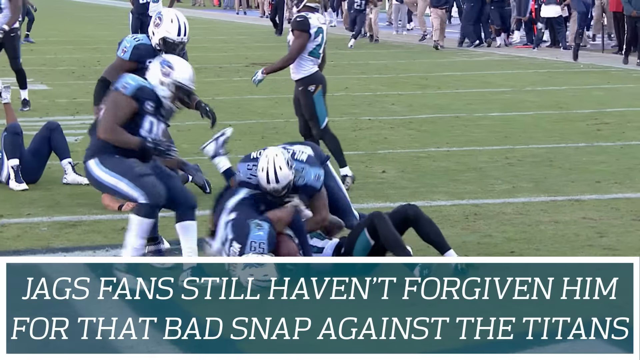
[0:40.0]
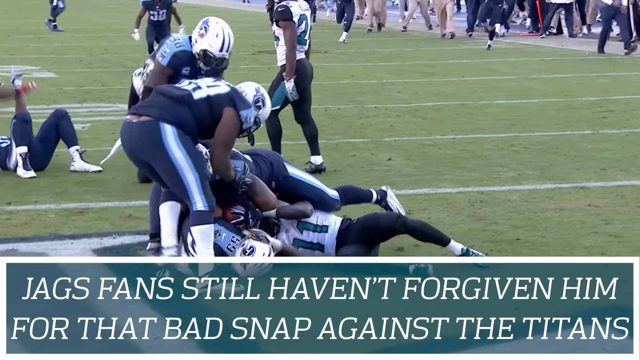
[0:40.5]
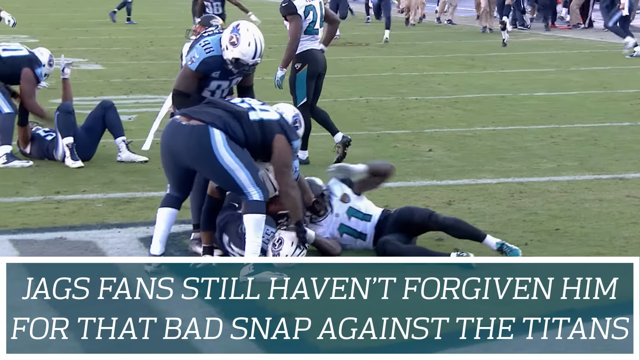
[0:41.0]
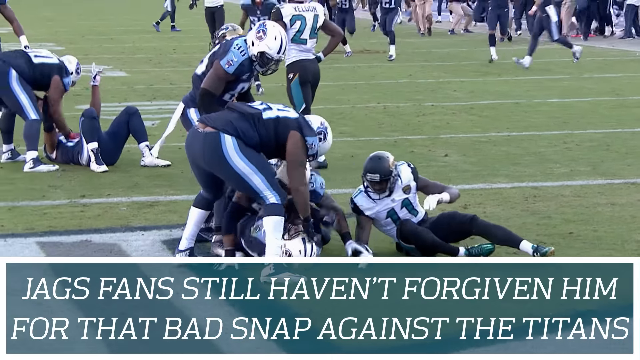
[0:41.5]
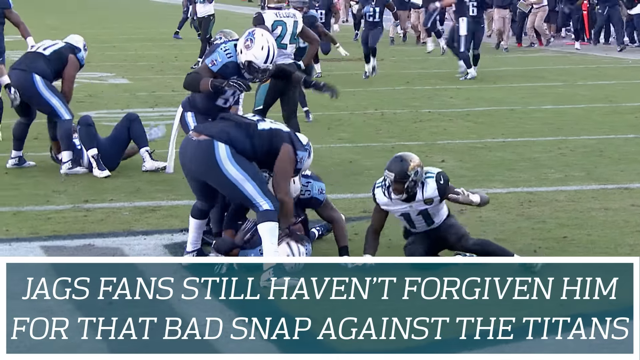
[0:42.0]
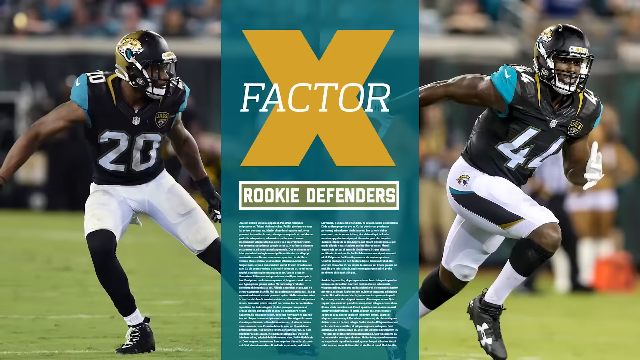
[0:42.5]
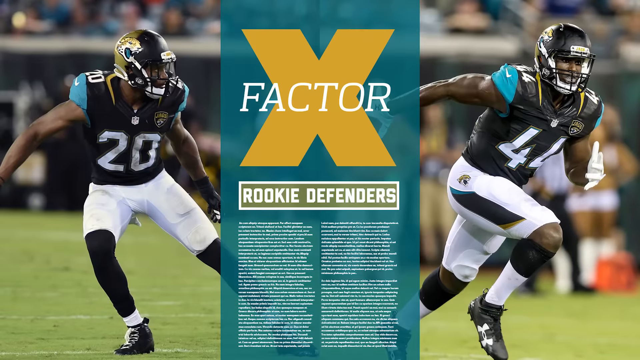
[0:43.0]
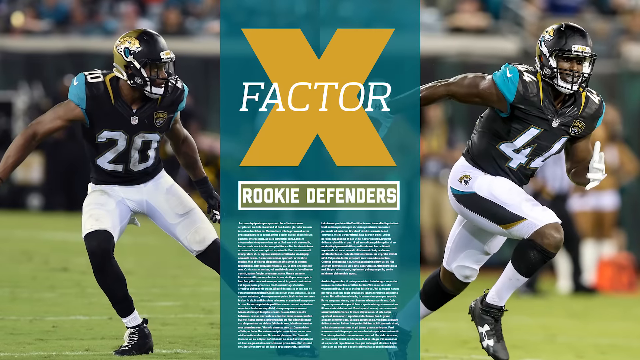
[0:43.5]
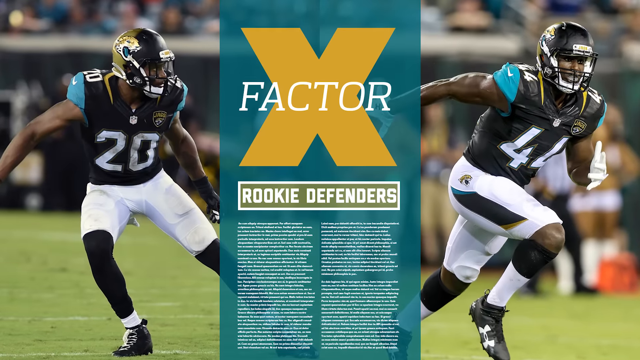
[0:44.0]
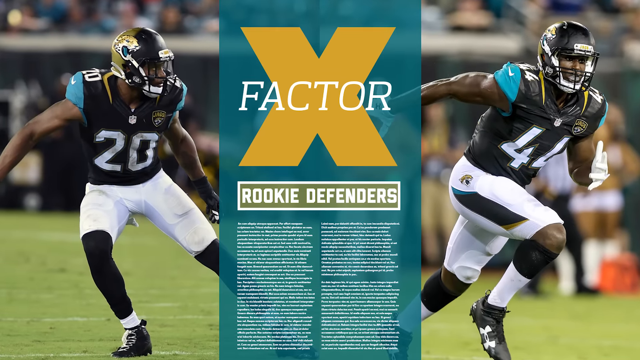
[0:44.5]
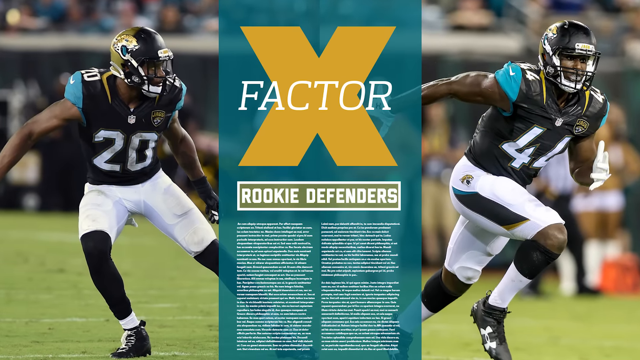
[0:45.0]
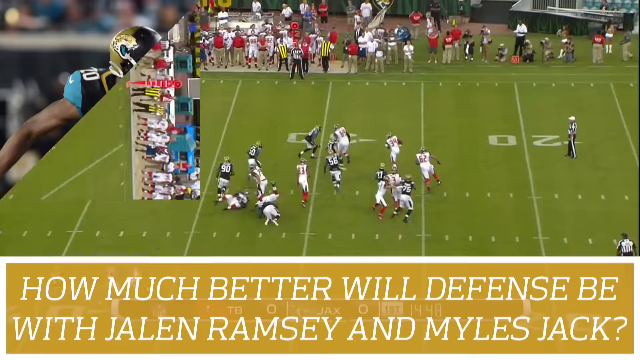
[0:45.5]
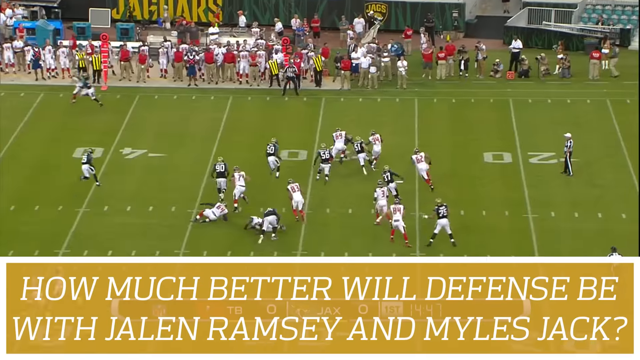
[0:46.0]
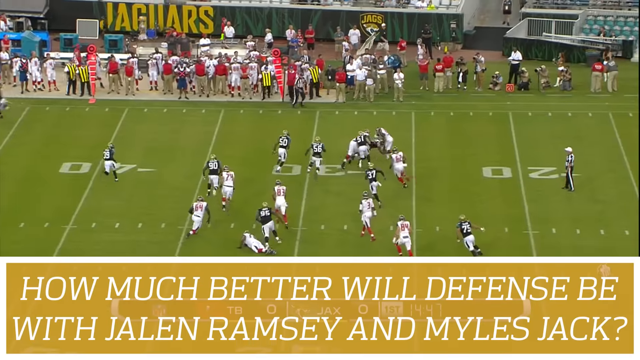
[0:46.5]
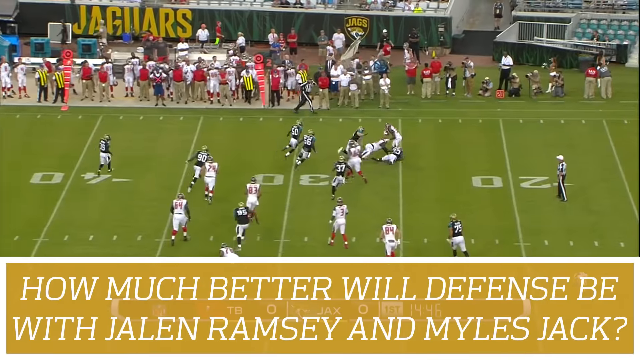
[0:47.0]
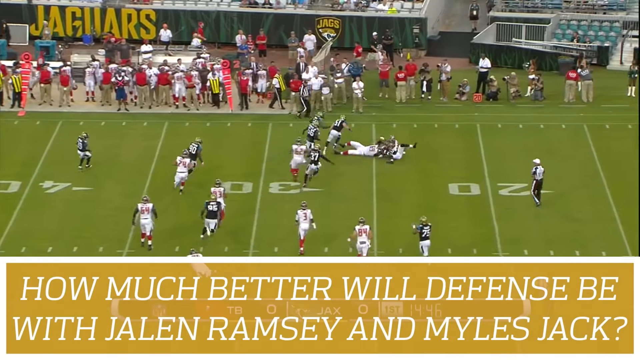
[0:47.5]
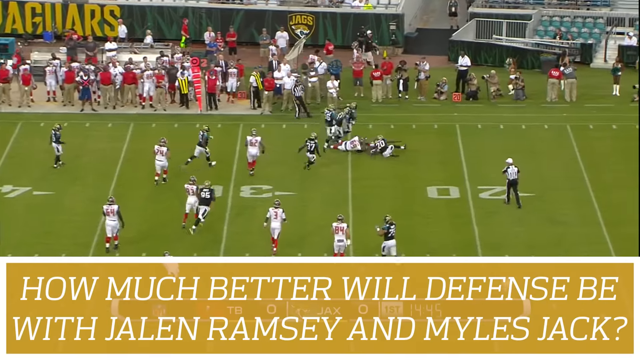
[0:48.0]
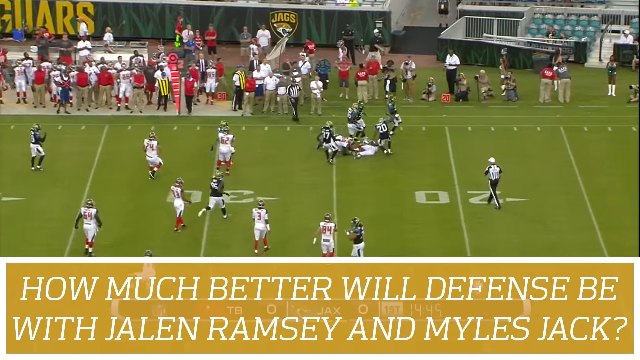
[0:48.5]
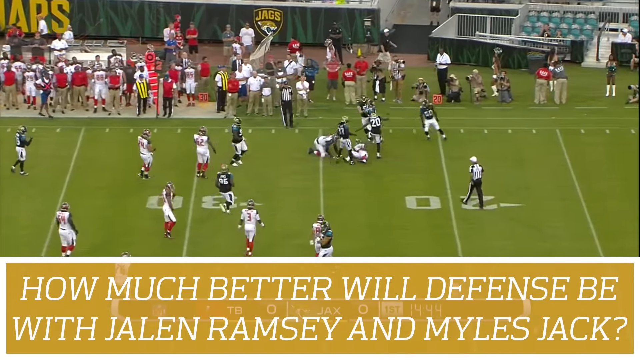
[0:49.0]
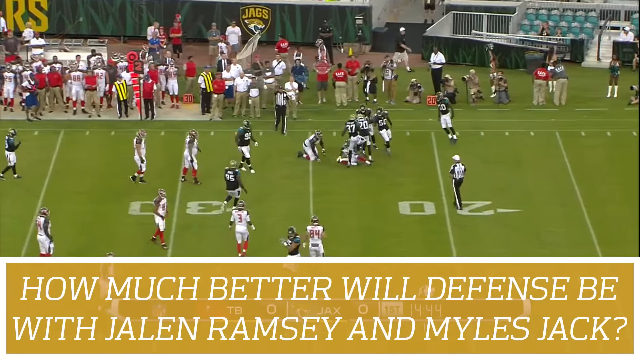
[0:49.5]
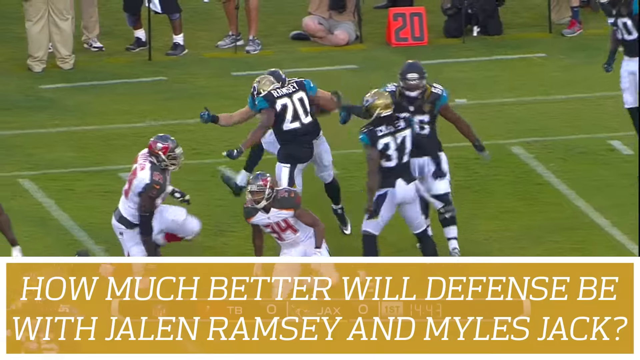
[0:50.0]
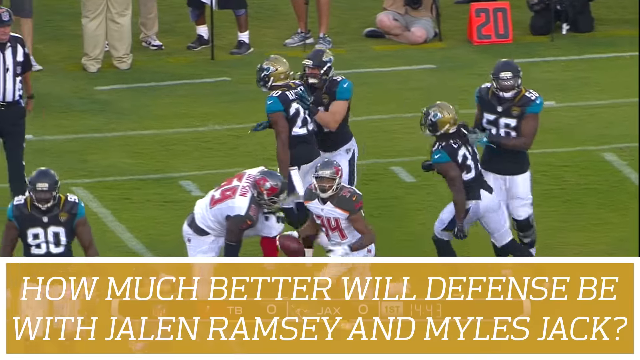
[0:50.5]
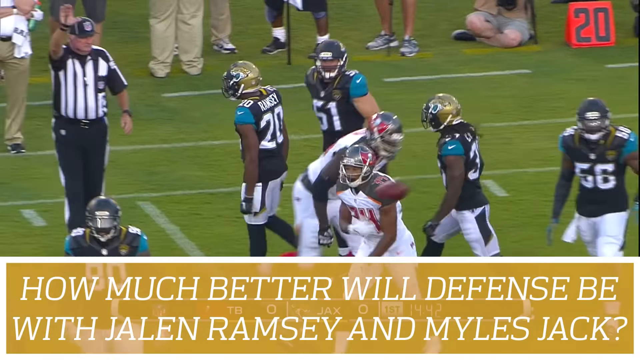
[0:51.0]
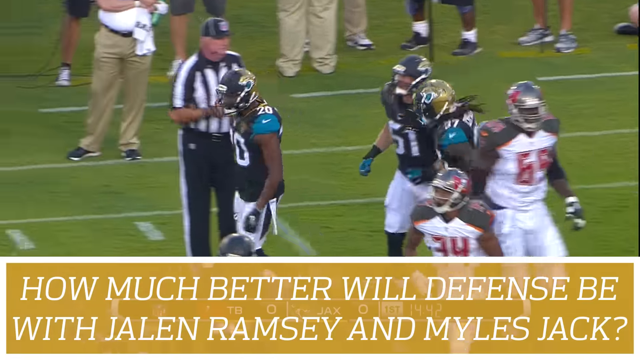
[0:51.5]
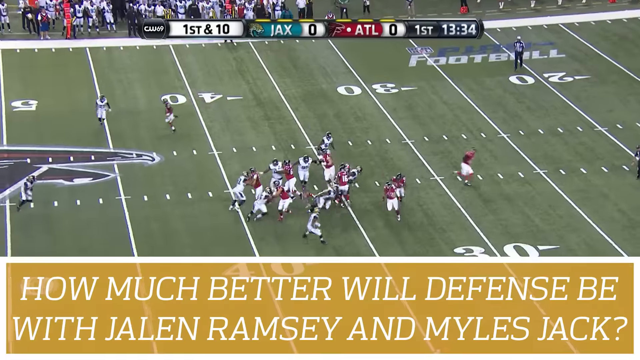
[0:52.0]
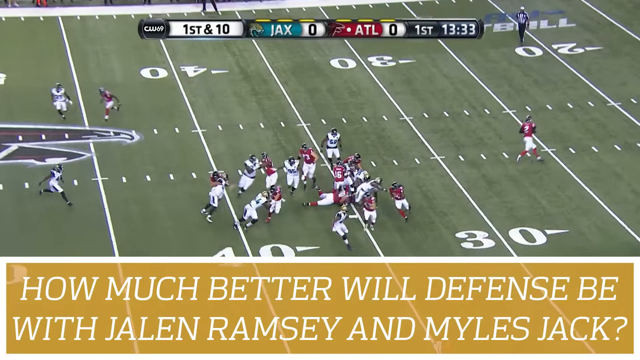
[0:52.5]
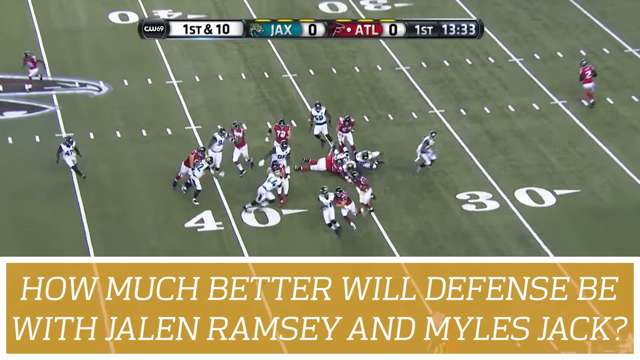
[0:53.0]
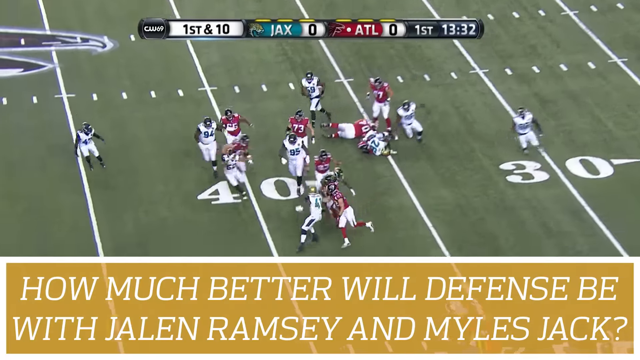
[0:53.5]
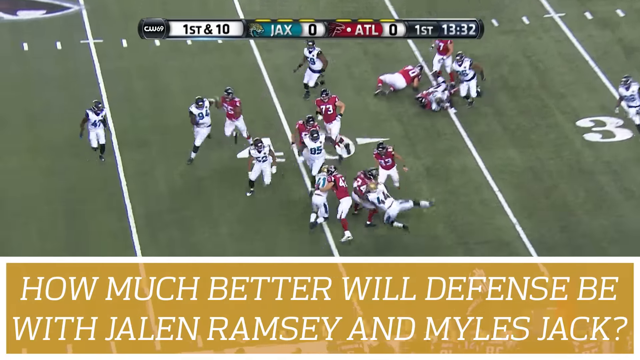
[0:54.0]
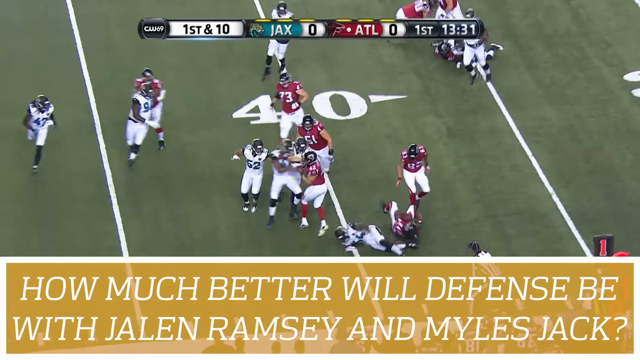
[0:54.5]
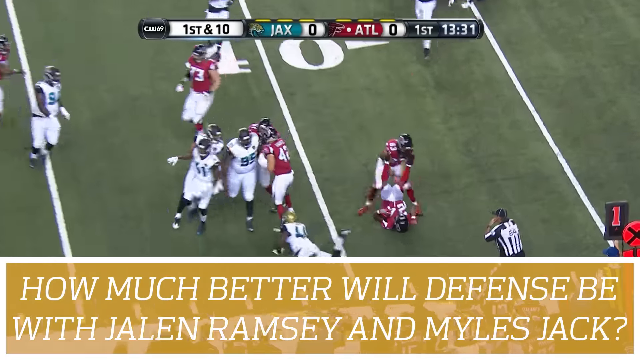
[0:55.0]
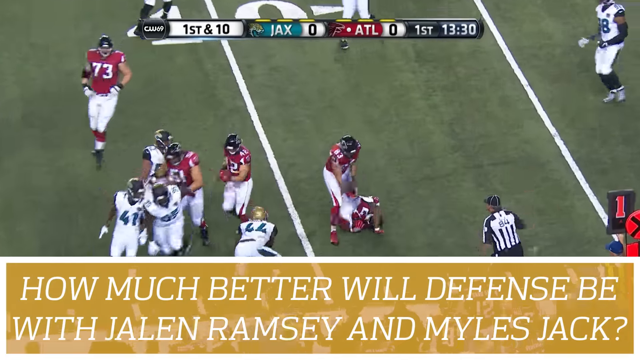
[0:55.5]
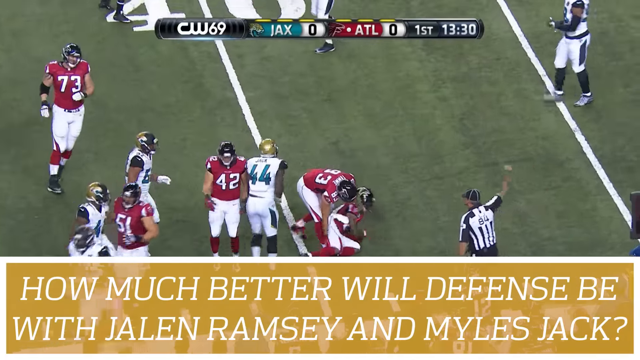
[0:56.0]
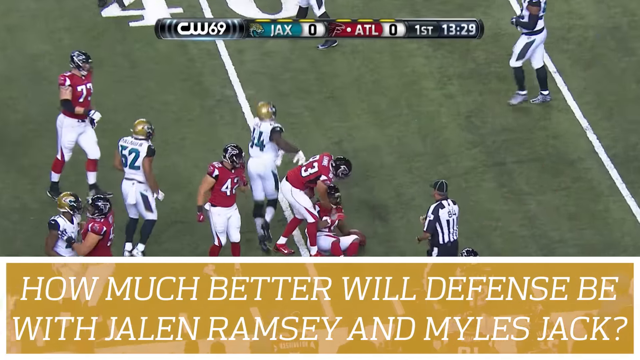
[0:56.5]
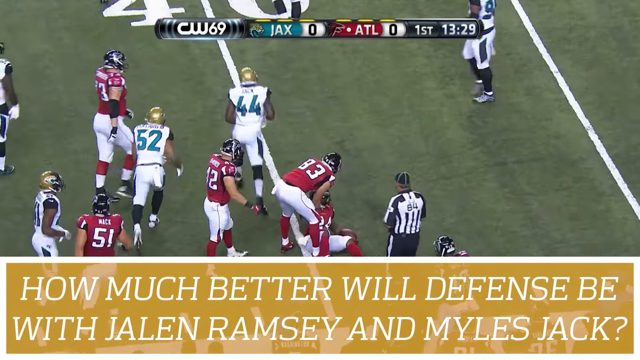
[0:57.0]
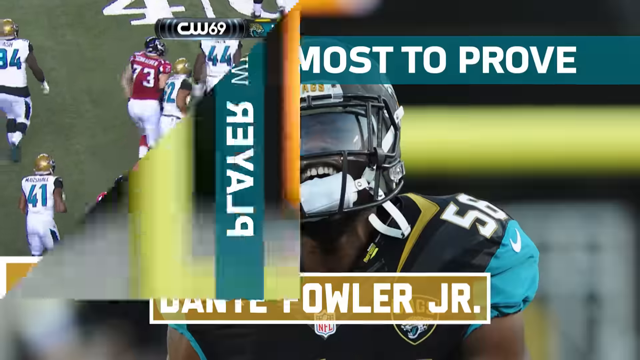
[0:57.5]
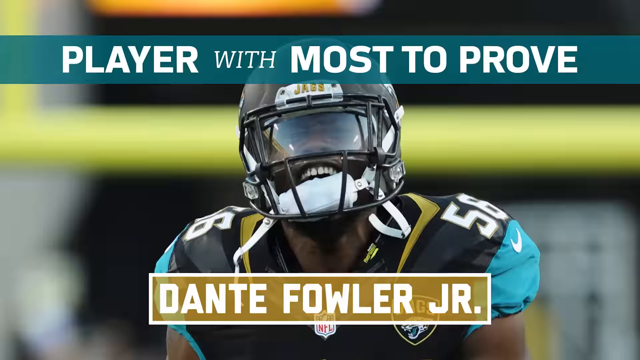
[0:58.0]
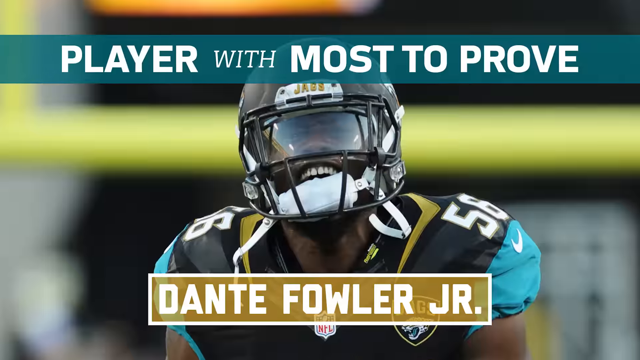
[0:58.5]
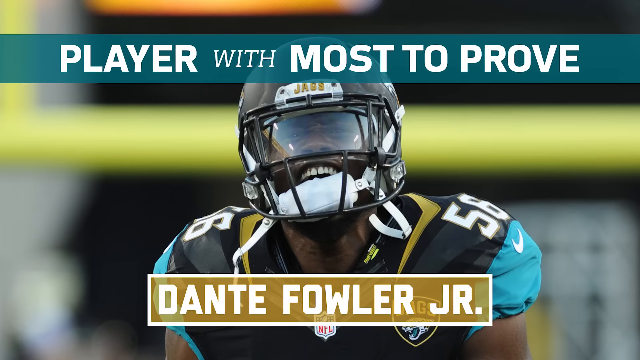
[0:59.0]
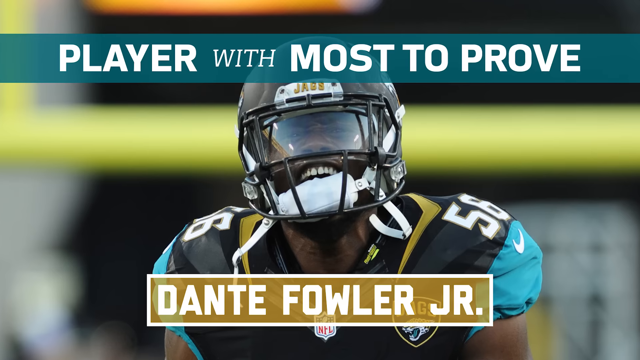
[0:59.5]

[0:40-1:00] Players fight for the ball on the ground. The scene changes to two Jacksonville Jaguars players, number 20 on the left and number 44 on the right, with the text "X factor rookie defenders" in the middle. In a game between the Jacksonville Jaguars and the Tampa Bay Buccaneers, the Jaguars recover an interception. In a different game, the Atlanta Falcons versus the Jacksonville Jaguars, a Falcons running back runs with the ball and is tackled to the ground by a Jaguars defensive back. Next, a Jacksonville Jaguars player is in the middle, with the words "Player with most to prove" on top and the player's name, Dante Fowler Jr., at the bottom.